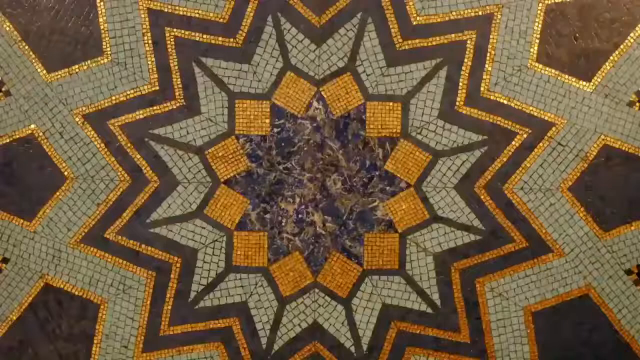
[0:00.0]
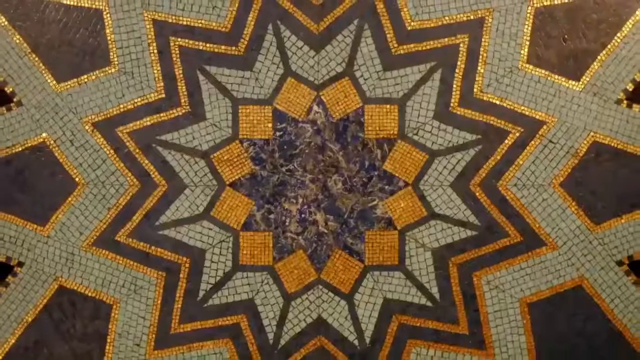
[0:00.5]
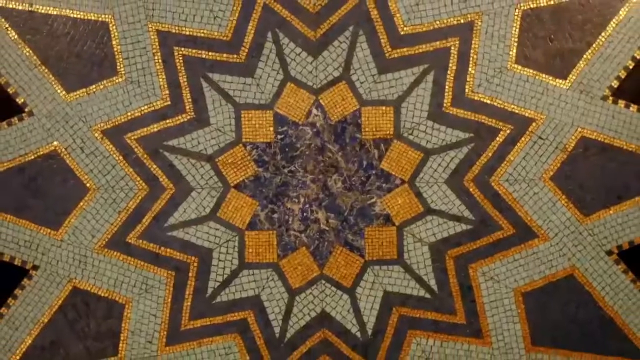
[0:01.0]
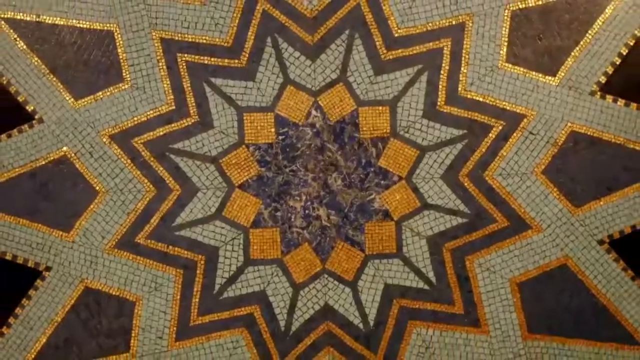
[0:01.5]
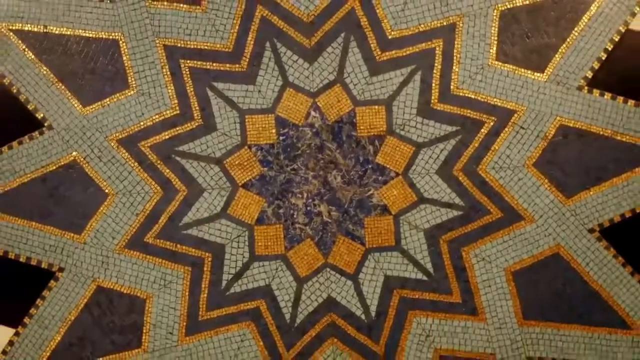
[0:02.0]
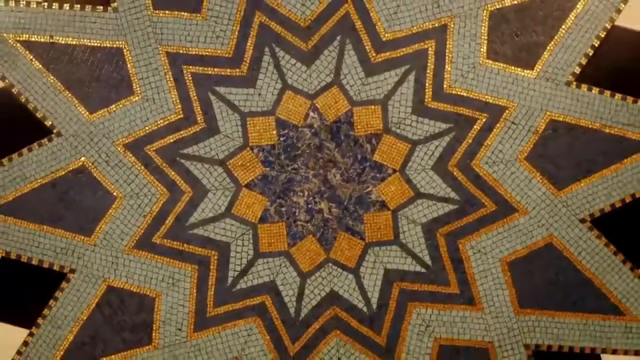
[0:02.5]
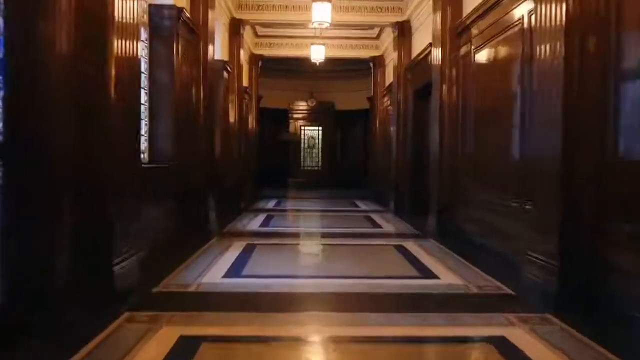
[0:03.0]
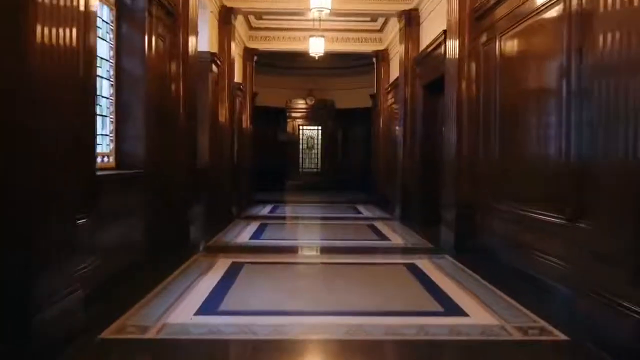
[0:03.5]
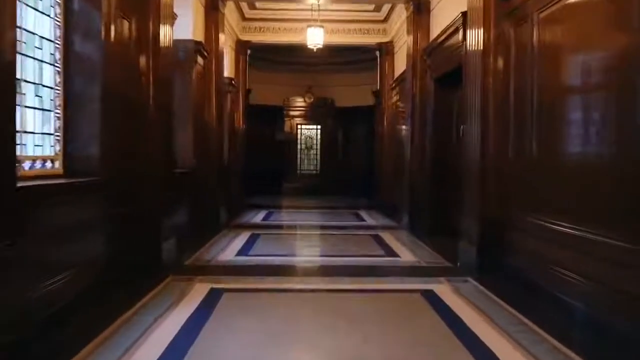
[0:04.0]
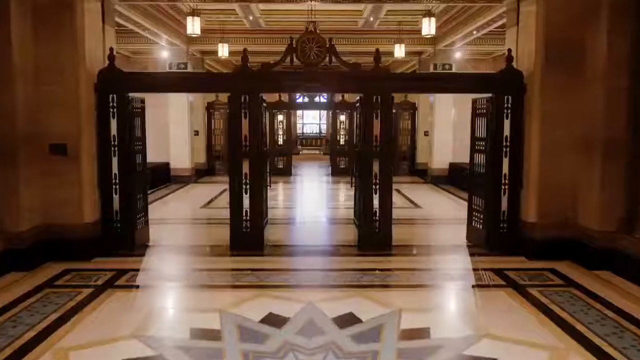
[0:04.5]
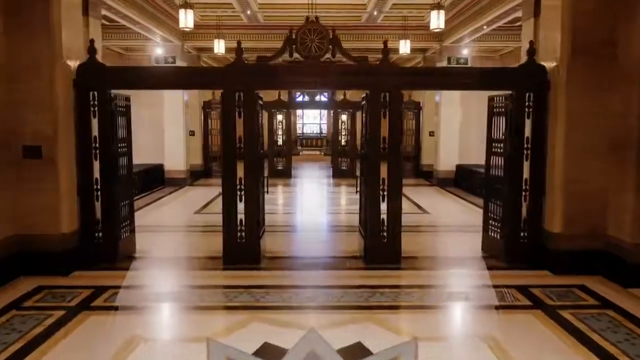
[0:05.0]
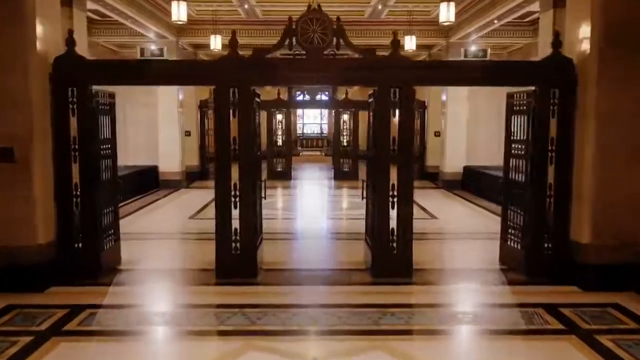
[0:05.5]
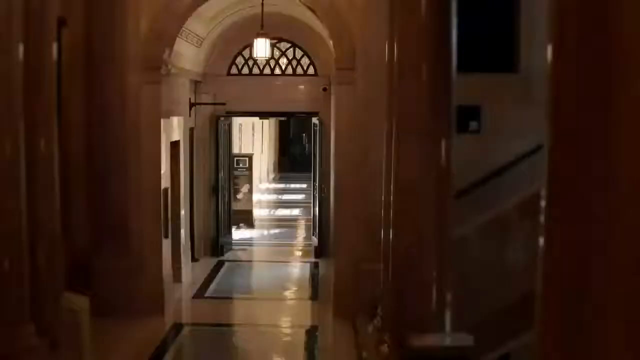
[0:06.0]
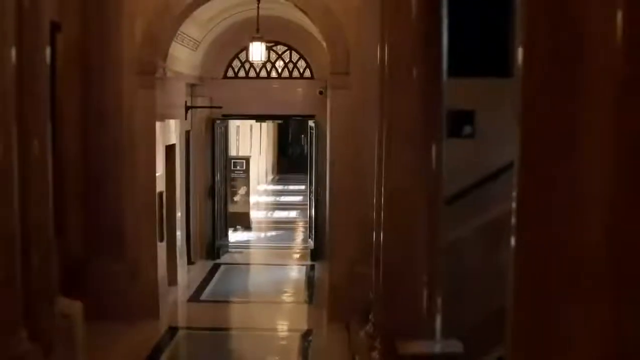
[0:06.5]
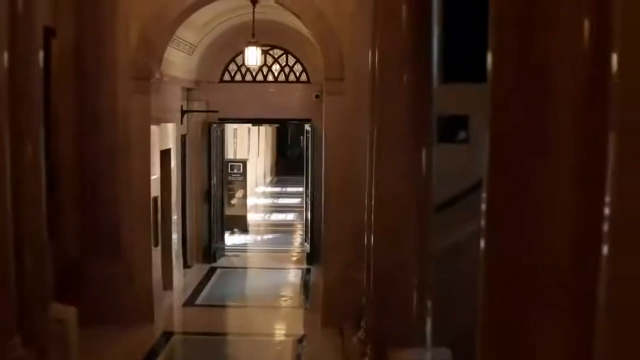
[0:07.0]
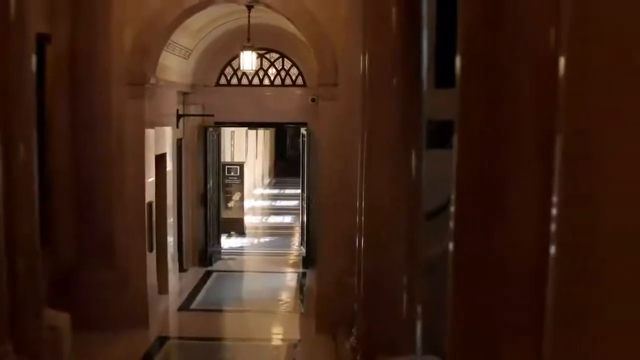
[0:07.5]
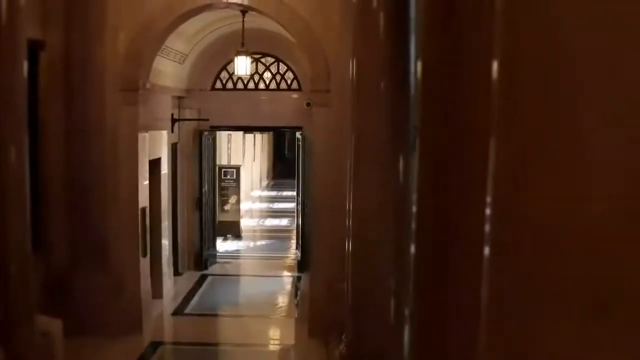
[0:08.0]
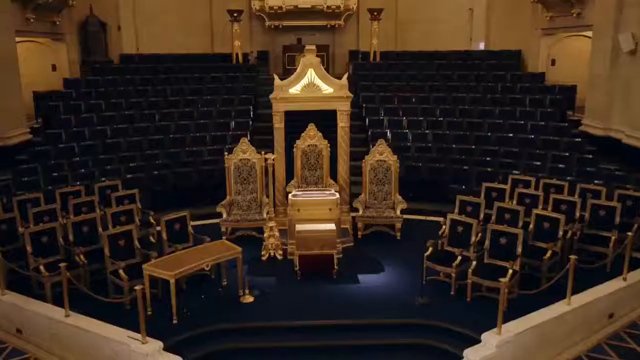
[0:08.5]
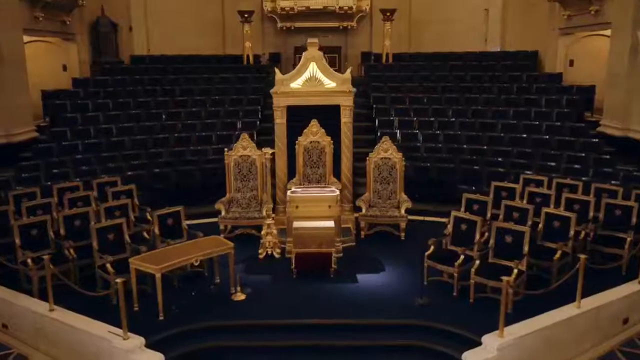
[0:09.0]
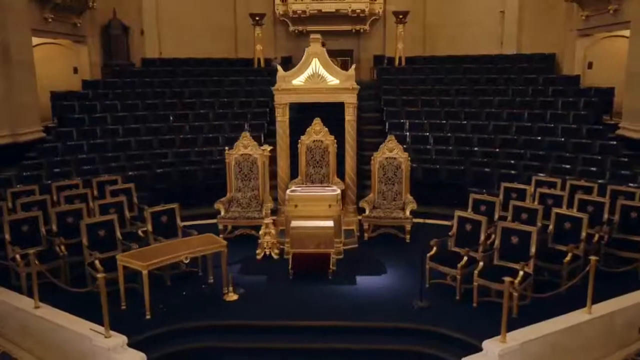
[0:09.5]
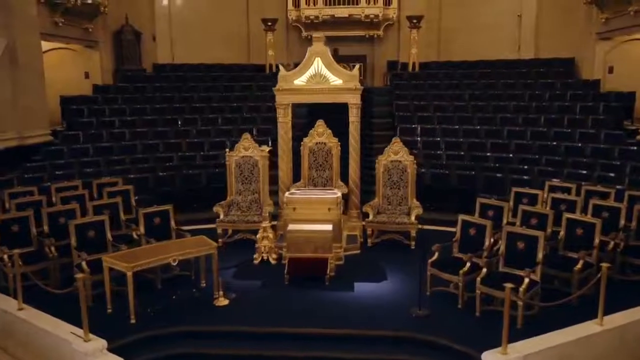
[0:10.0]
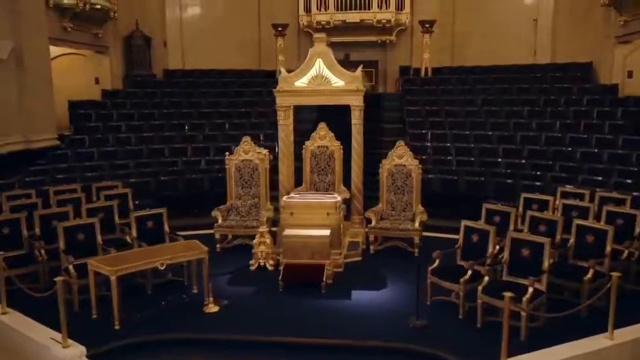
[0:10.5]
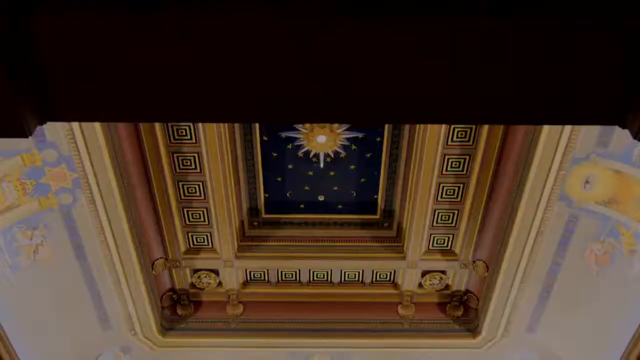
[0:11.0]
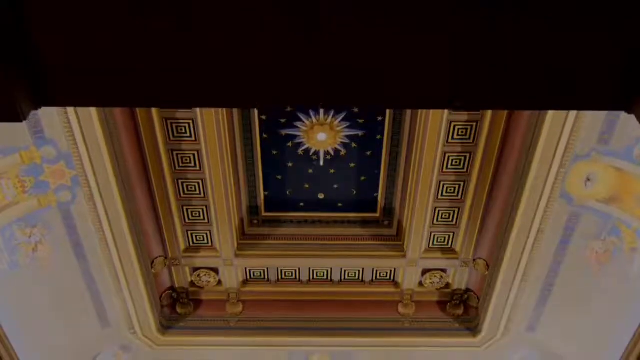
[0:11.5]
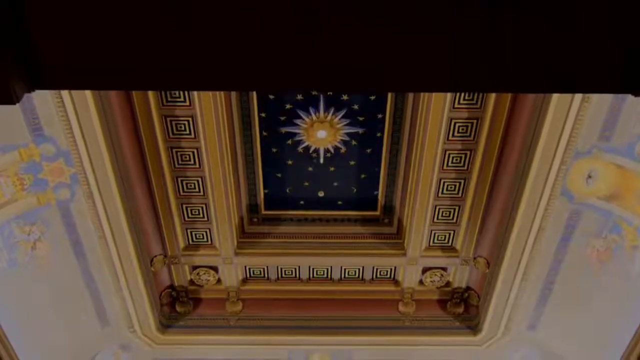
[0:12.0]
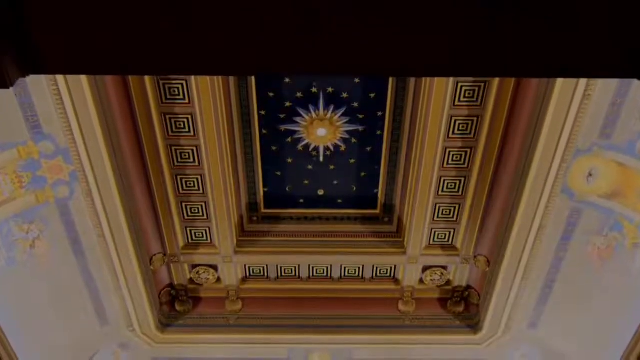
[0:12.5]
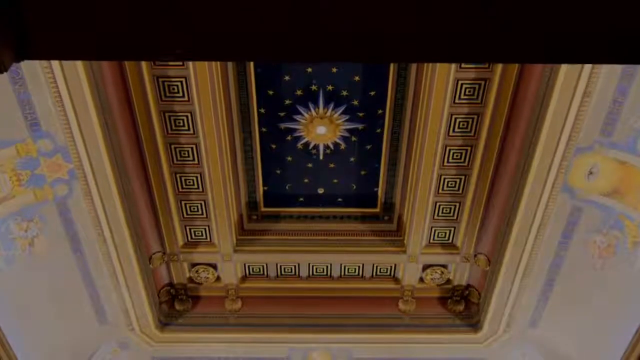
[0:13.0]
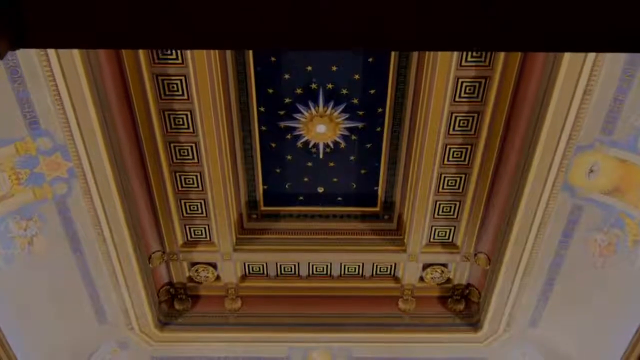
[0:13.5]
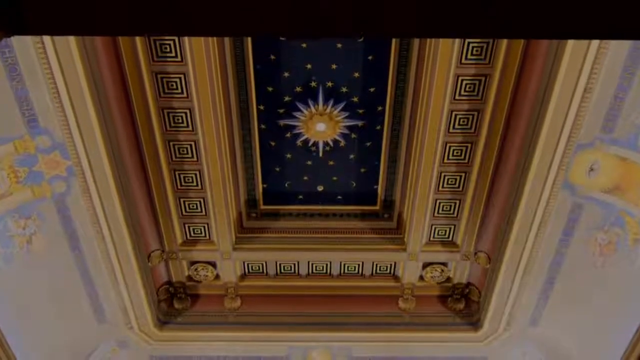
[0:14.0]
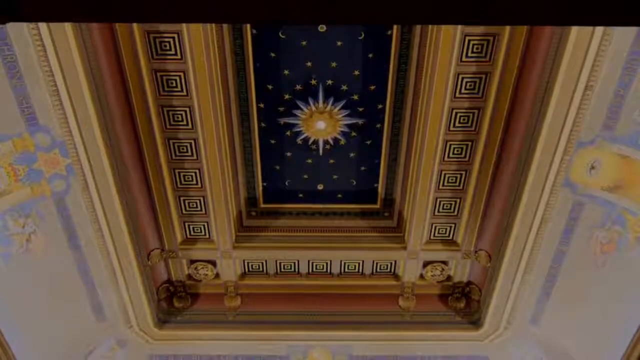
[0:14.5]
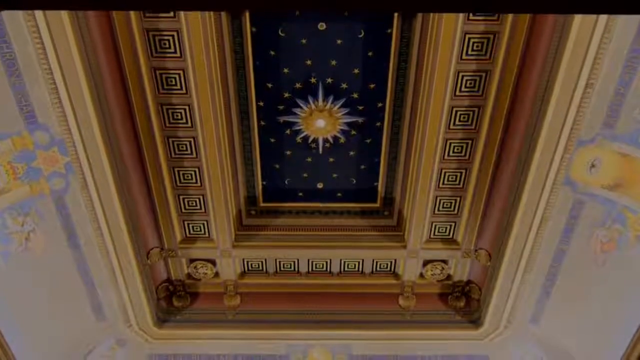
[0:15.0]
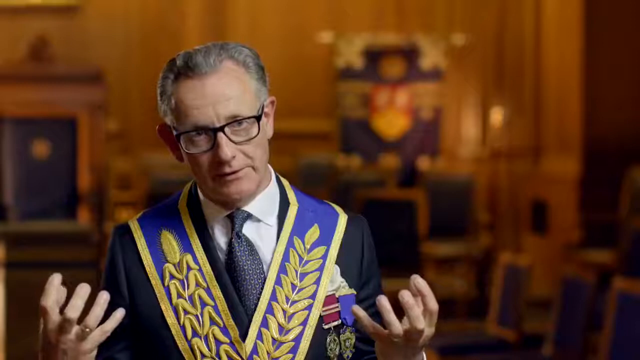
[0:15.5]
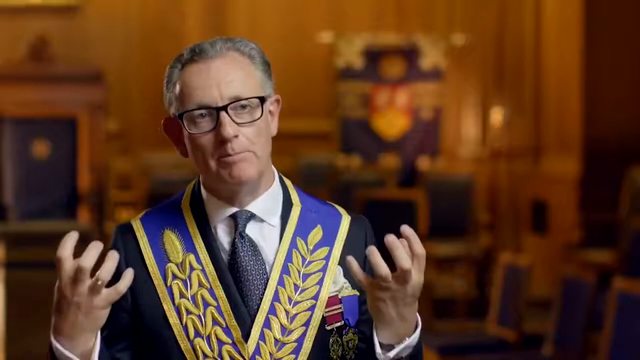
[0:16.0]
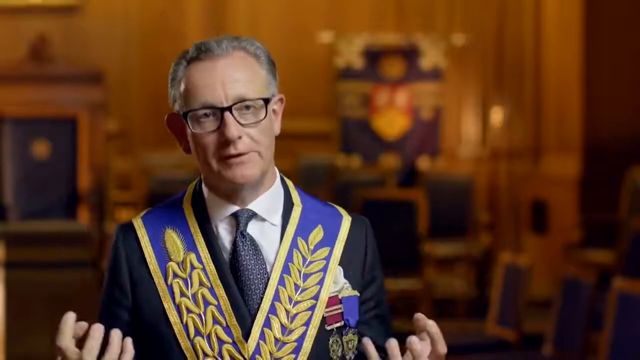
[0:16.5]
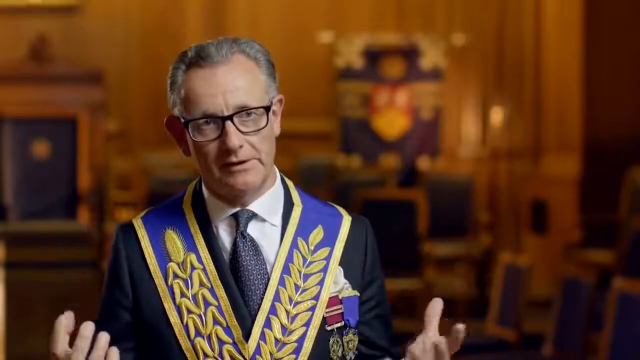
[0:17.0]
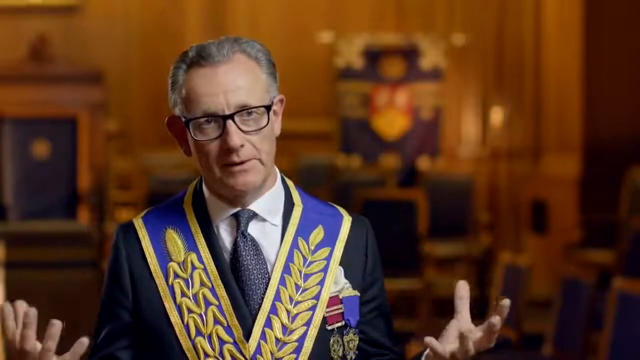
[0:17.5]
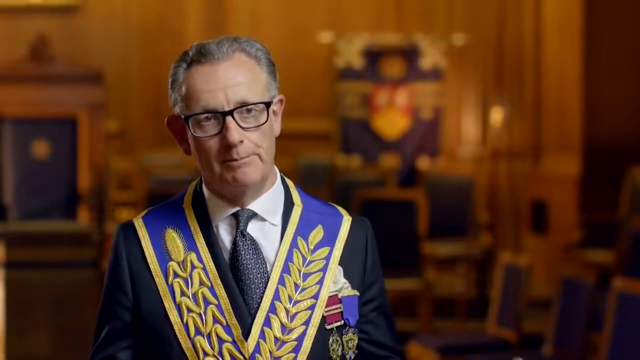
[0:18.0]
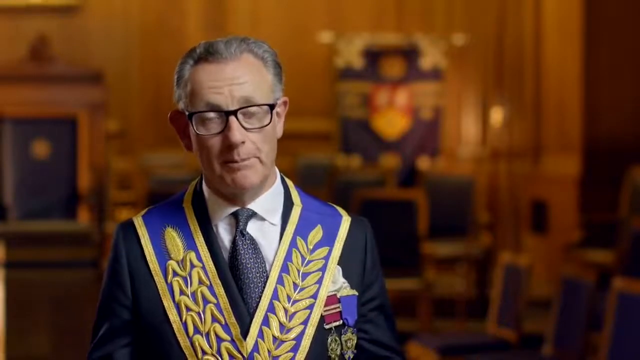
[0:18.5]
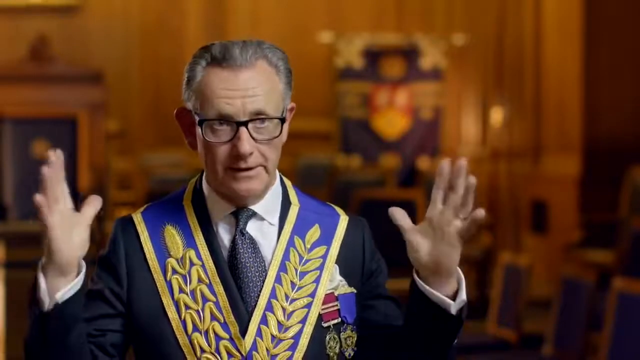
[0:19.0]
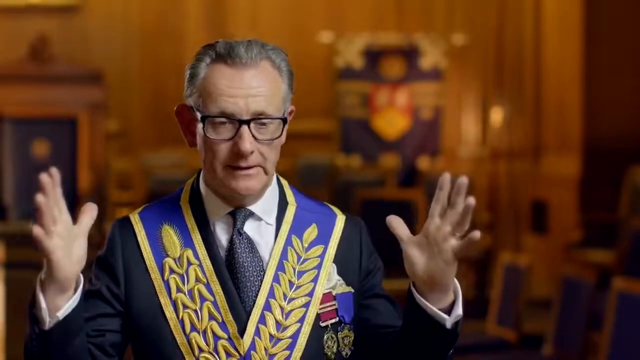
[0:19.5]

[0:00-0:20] The video opens on some sort of tiling: an aerial view of elaborate marble flooring in some sort of foyer, laid out in the formation of a starburst. The middle is marble, and the starburst is traced in gold, with gray and gold squares in it. A brown star outlined in gold sits within the starburst. The space looks like an entryway, apparently of a historic train station. In the top middle of the entryway there appears to be a clock or a dial in the center. There are three entryways, and the camera takes a virtual tour, zooming forward through the gates of this entryway.